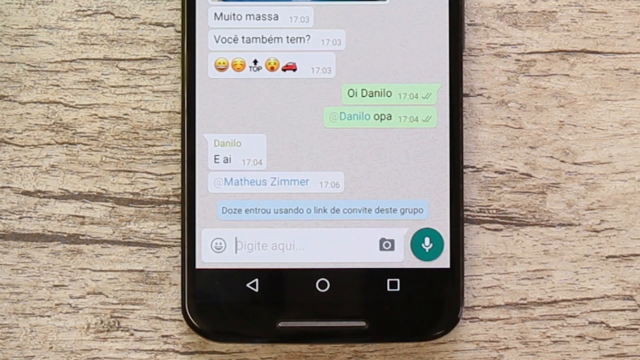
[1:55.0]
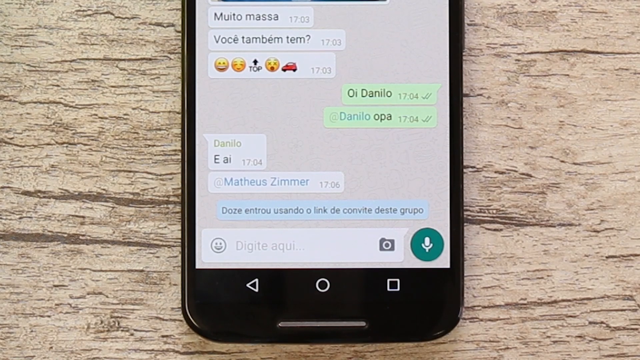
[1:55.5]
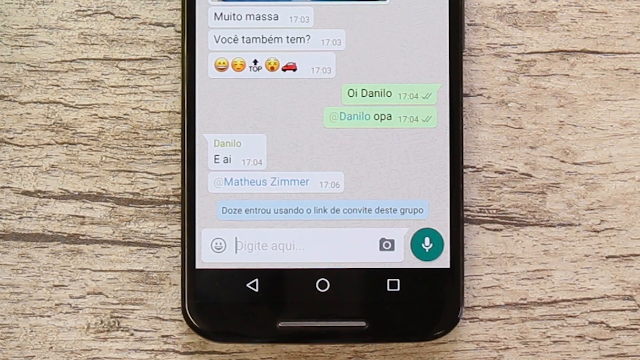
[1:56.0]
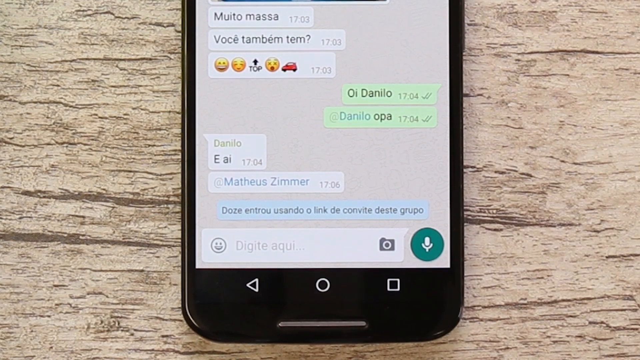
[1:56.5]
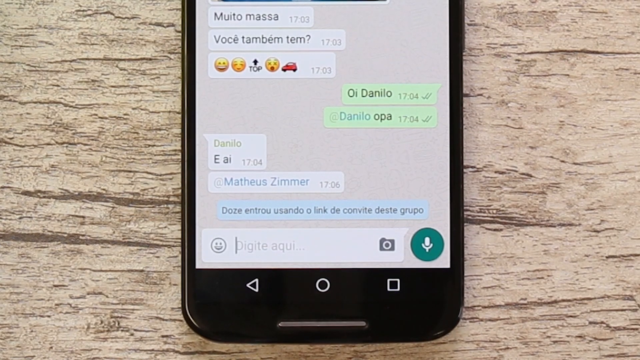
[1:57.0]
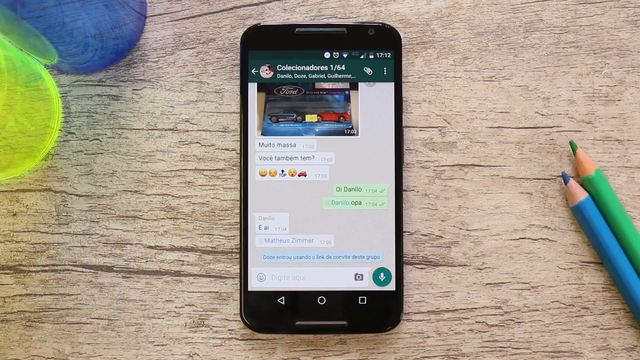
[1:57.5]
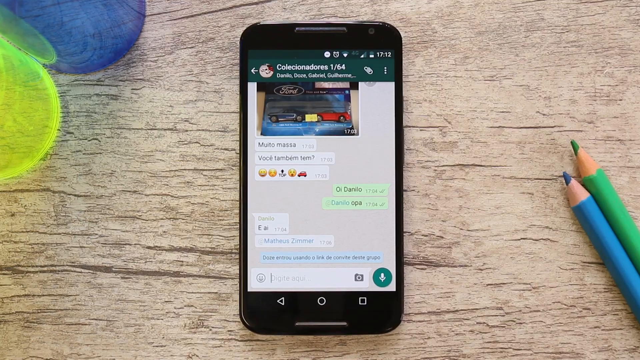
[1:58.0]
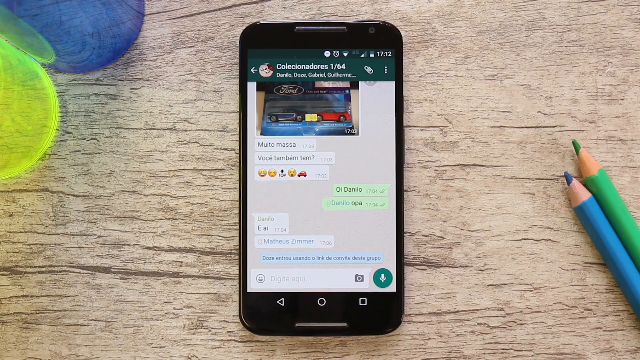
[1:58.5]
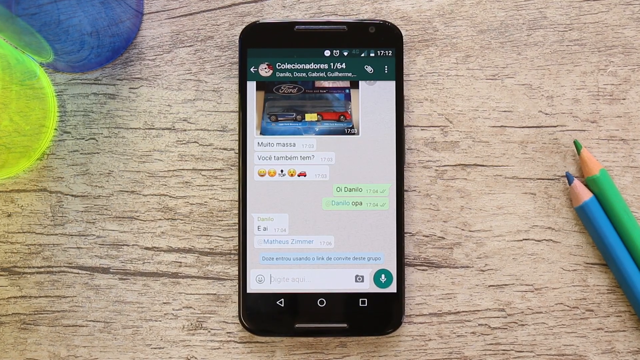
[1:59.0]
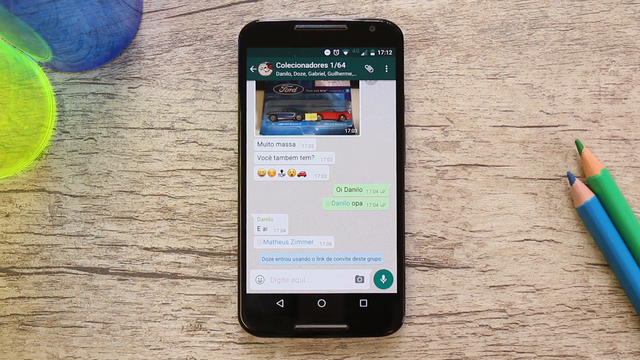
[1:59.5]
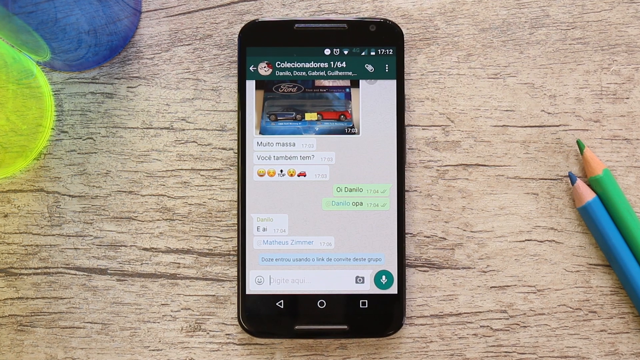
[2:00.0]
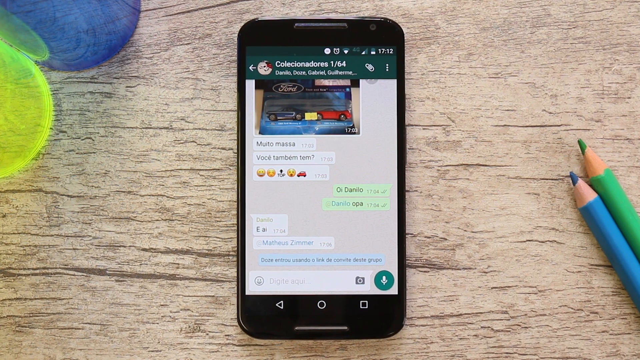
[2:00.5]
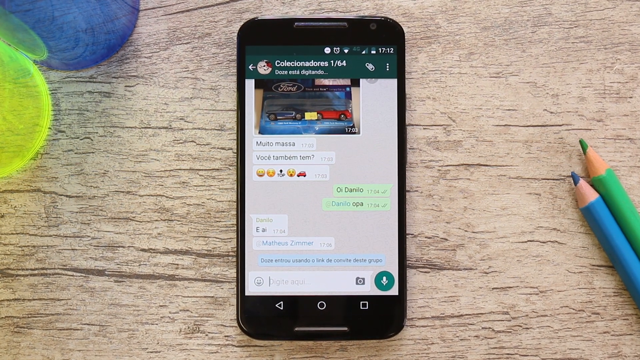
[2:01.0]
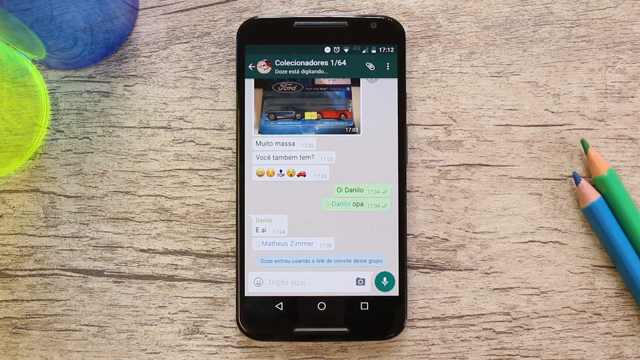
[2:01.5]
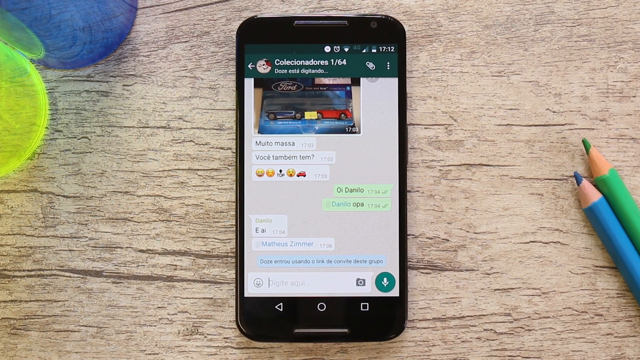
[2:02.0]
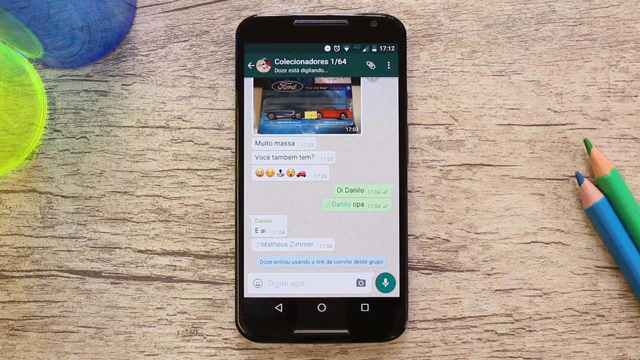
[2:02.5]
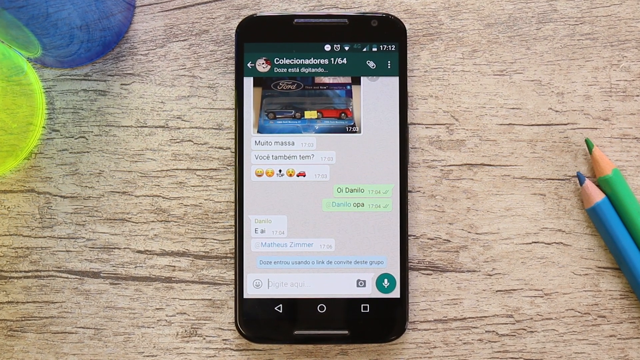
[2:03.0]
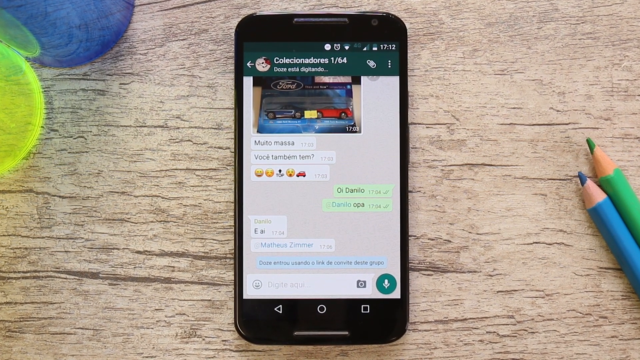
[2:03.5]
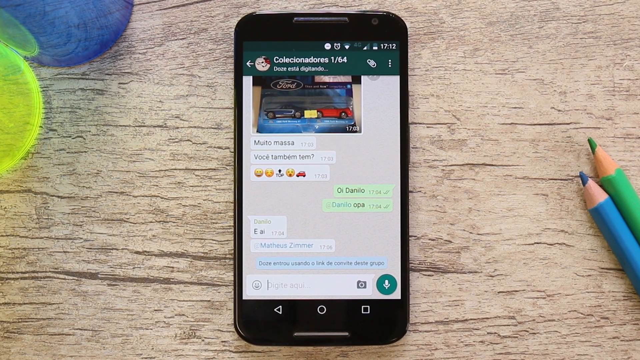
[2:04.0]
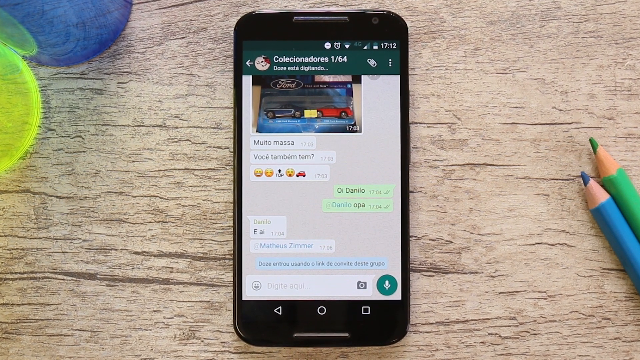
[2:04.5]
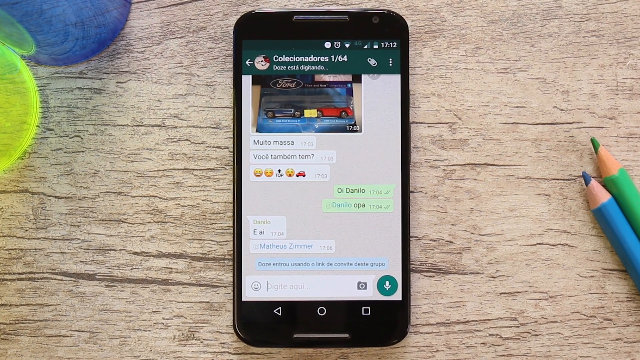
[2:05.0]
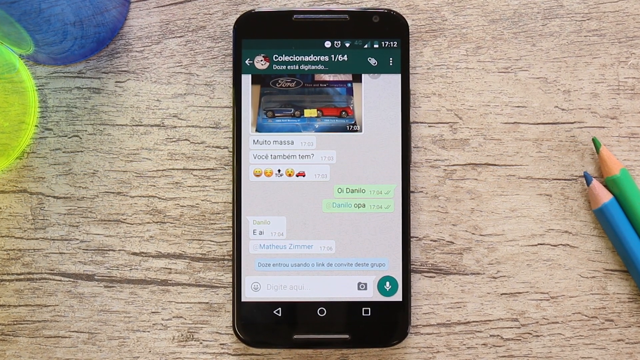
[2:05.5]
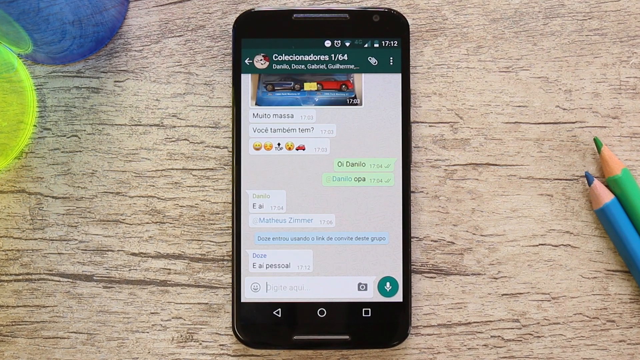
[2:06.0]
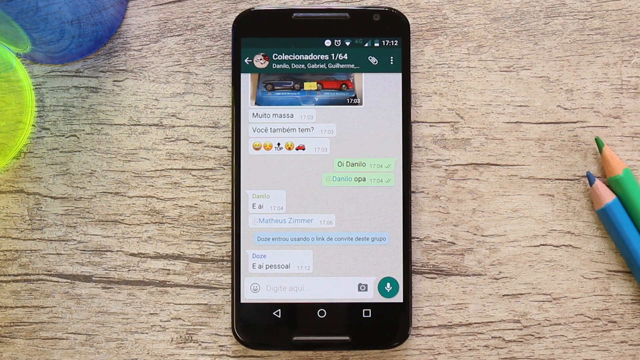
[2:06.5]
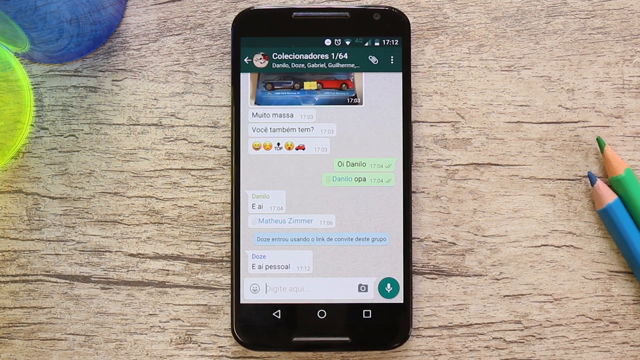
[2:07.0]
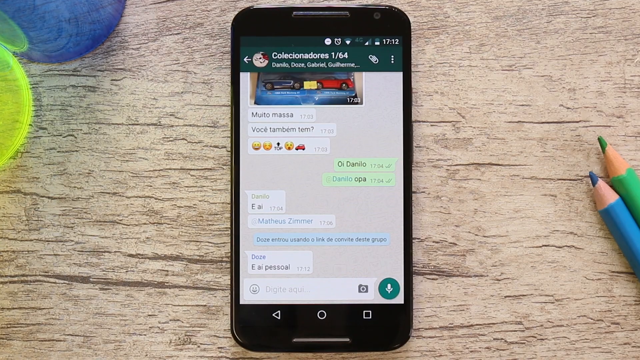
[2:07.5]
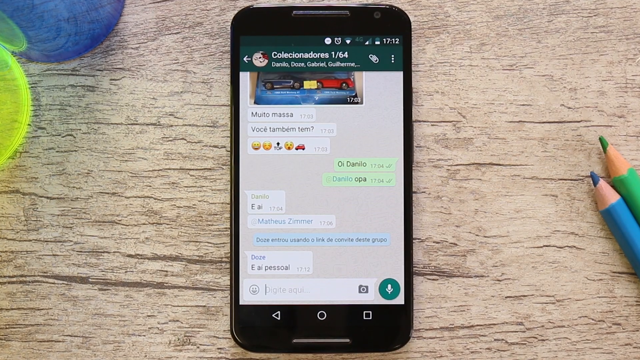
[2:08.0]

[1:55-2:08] On the left side of the phone is a red circle icon with a broken T in it. On the right side is a link to a video, like a YouTube thumbnail, reading "Como Usar" and "WhatsApp", and it is a minute and 57 seconds long. The thumbnail shows a white woman in a white collared dress looking at a laptop or computer screen that says WhatsApp. The thumbnail has WhatsApp in a neon green font similar to the WhatsApp color. On the phone, the cursor blinks in the text box of the conversation with Matthias Zimmer, and the view zooms in to a closer shot of the text box area, where the cursor is still blinking.